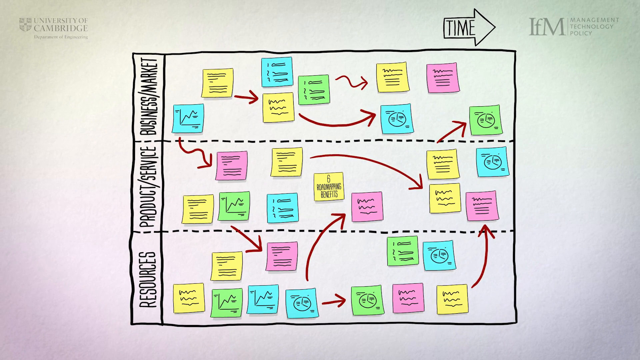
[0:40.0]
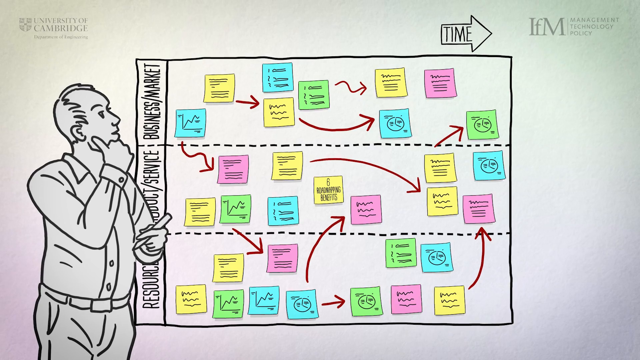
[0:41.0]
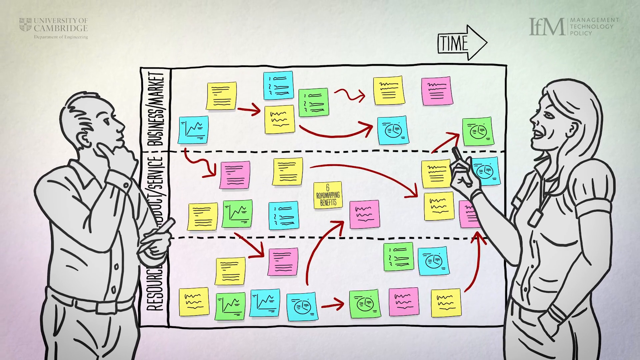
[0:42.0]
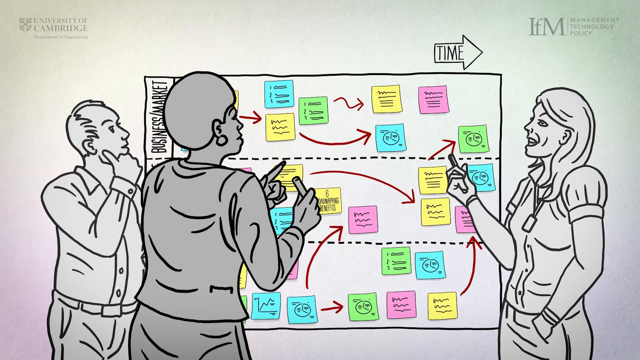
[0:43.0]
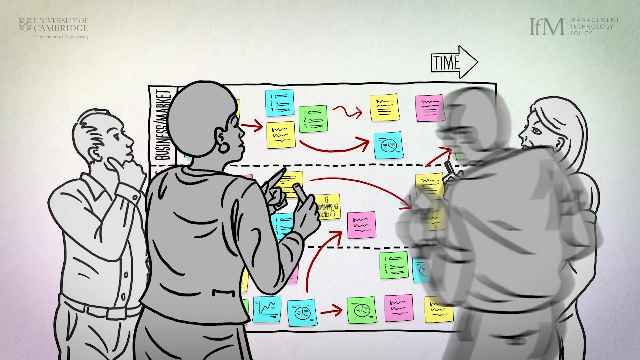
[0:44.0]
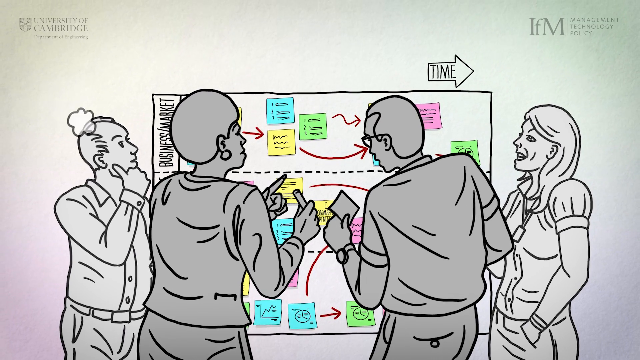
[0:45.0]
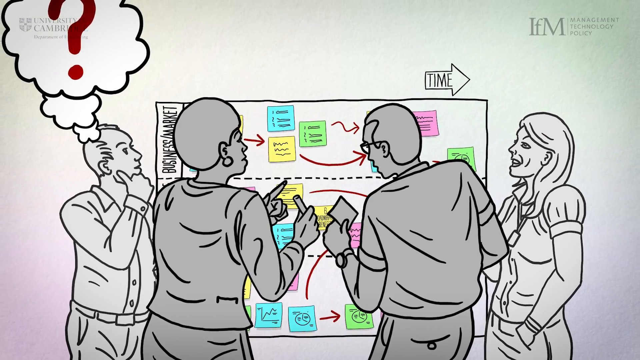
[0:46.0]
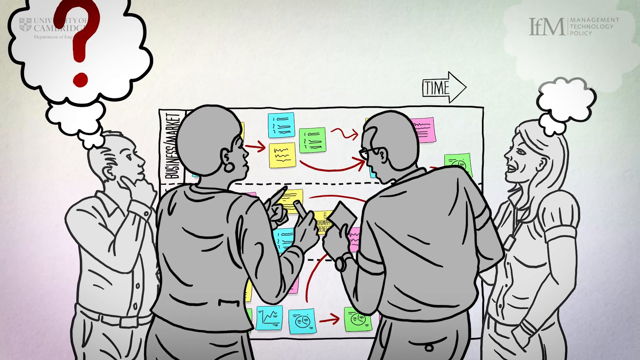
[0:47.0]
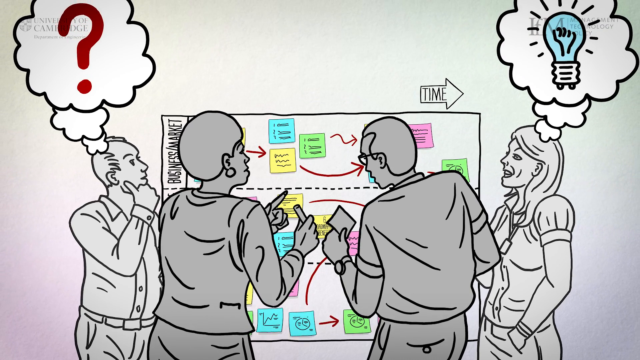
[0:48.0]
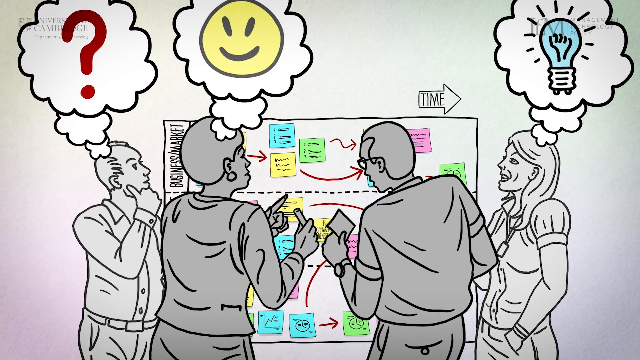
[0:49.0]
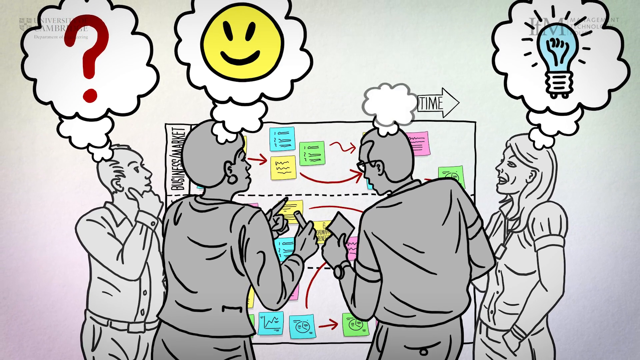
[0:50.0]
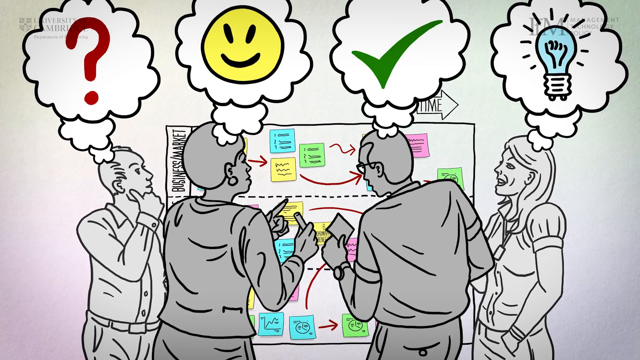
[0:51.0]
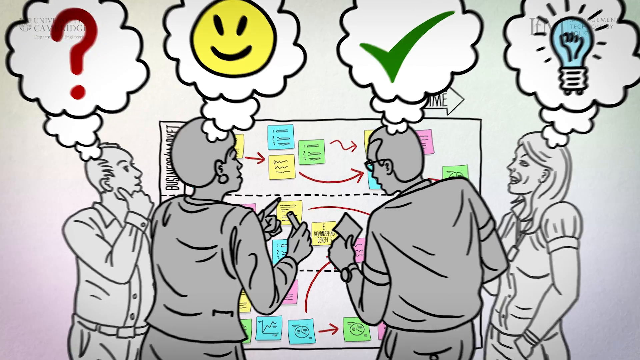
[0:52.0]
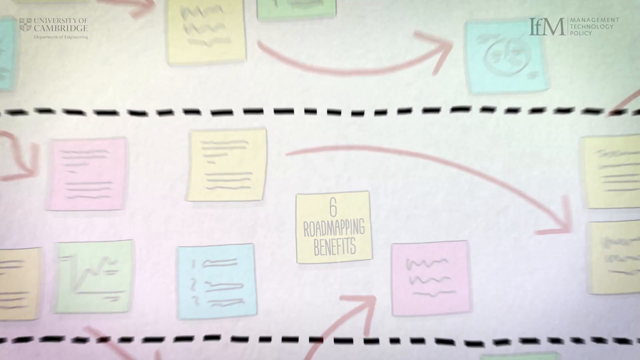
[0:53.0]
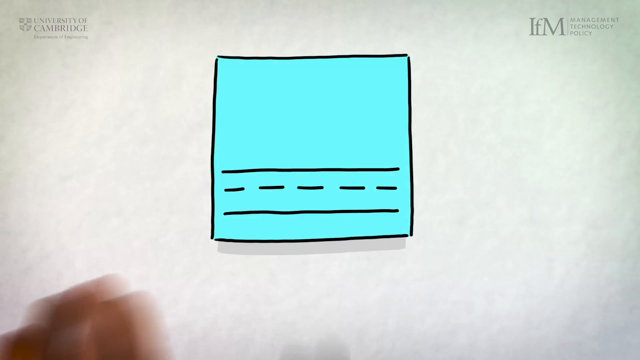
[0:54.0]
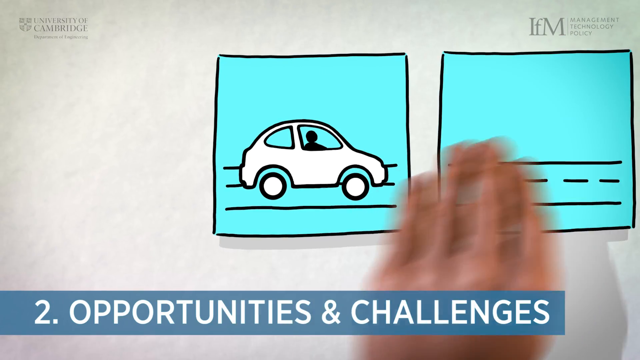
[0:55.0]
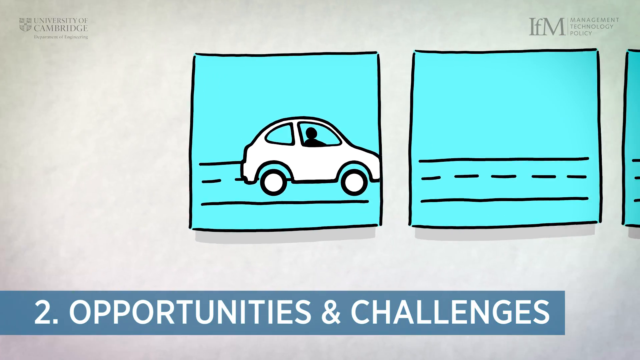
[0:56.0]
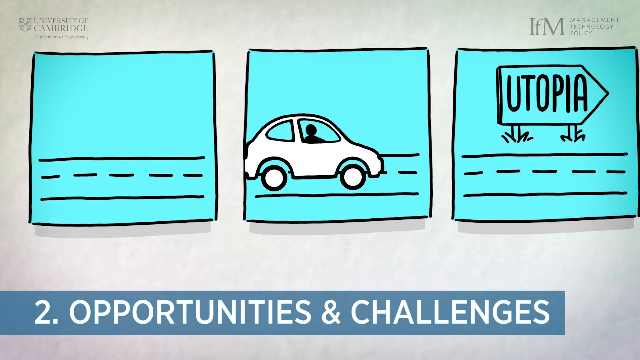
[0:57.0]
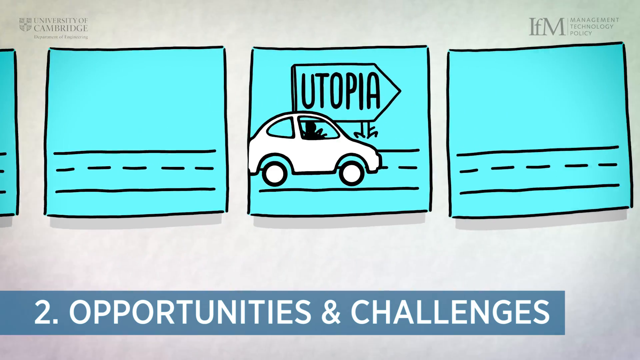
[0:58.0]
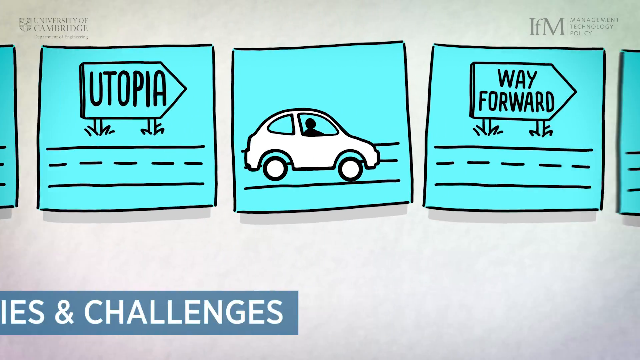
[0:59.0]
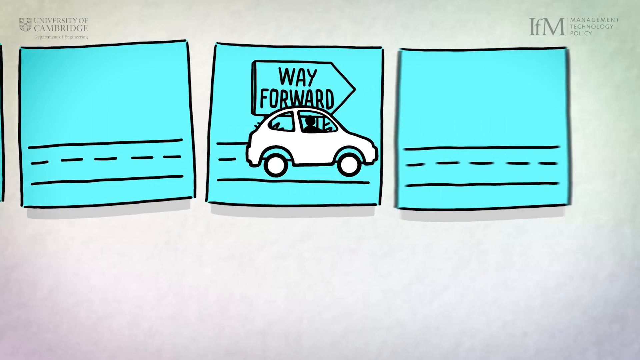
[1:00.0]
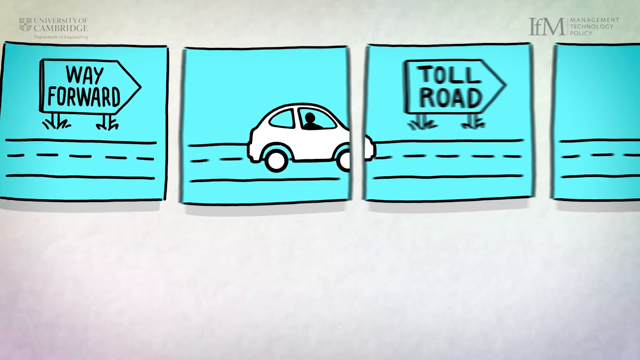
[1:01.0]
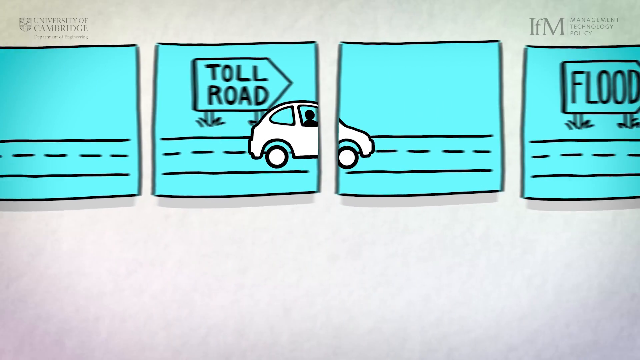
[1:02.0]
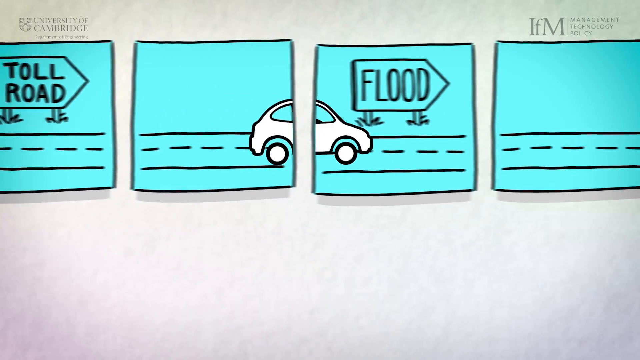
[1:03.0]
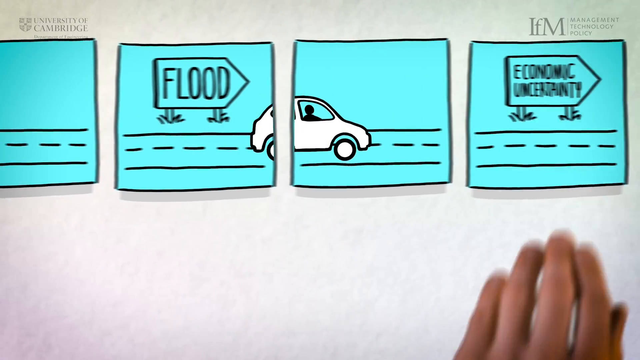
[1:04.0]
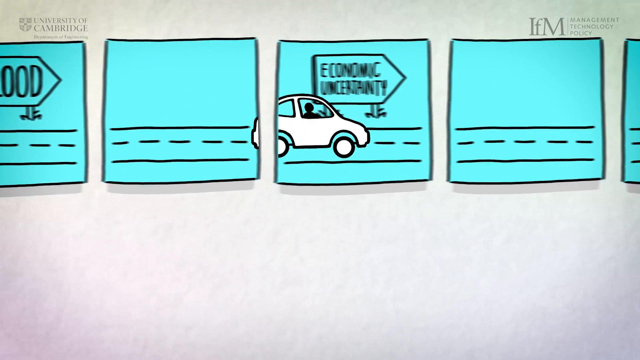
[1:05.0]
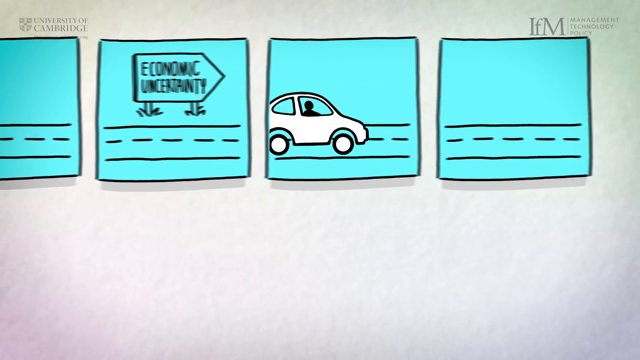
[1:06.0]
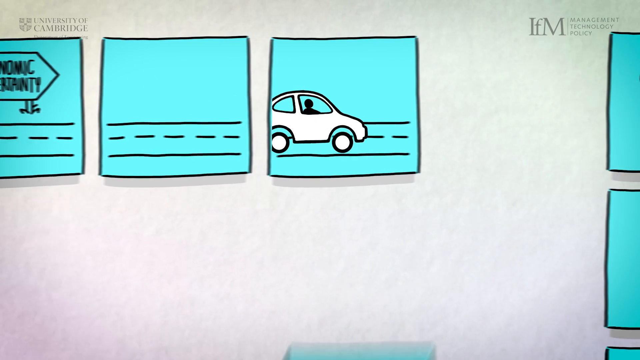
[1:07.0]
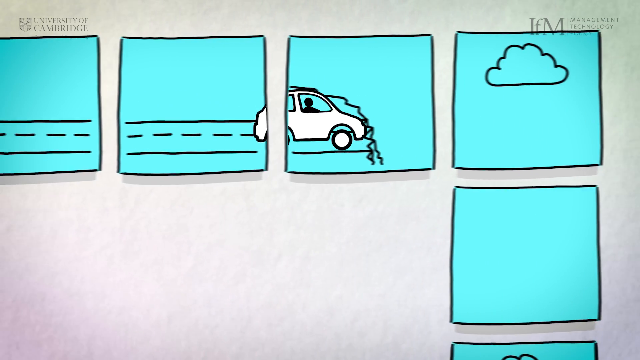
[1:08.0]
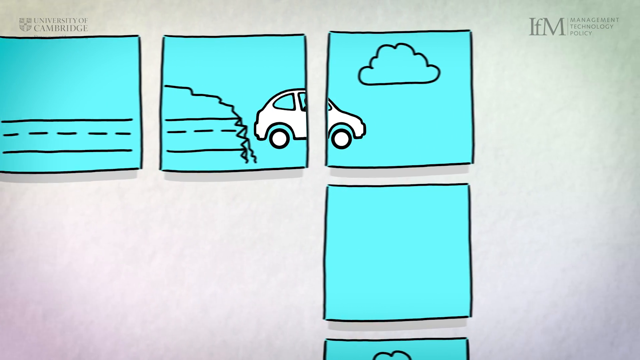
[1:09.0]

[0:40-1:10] A collage of sticky notes is set against a white screen, possibly arranged like a map. The notes are broken up into three sections: "resources," with a row of notes that apparently relate to resources; "product," with a row of notes that apparently relate to products; and, in the very top row, "business market," with a row of notes that all relate to business market. The sticky notes are blue, yellow, green, and purple, and arrows connect the Post-it notes to one another. A silhouette or cartoon depiction of a man is inserted into the video, and he looks at the big collage, probably trying to figure out what goes where. Other cartoon people come in as well, women and another man, and they all admire the collage, possibly studying it.